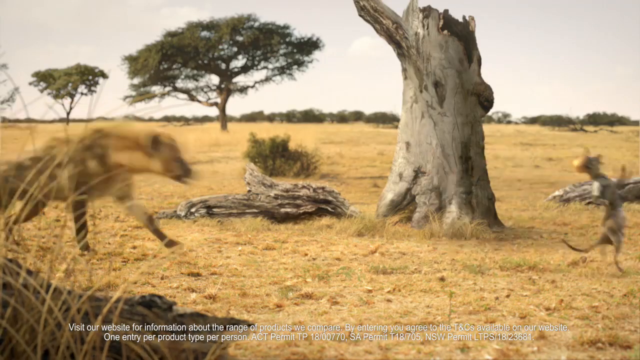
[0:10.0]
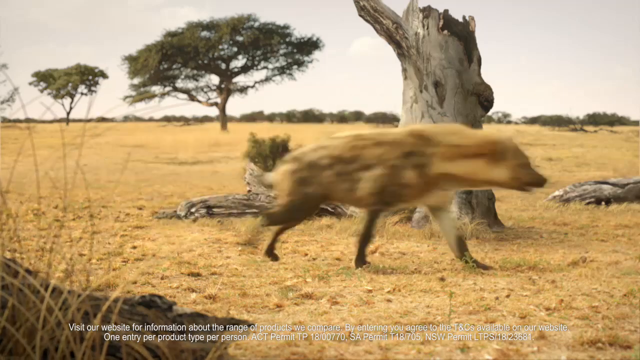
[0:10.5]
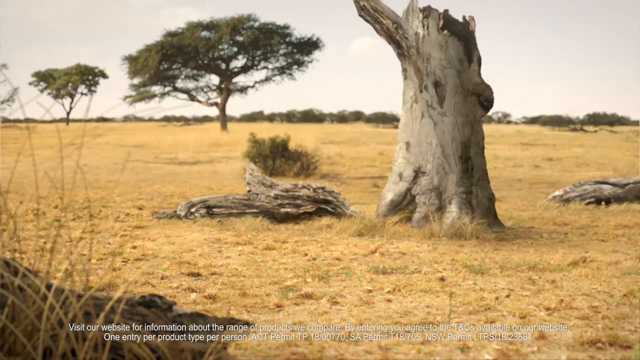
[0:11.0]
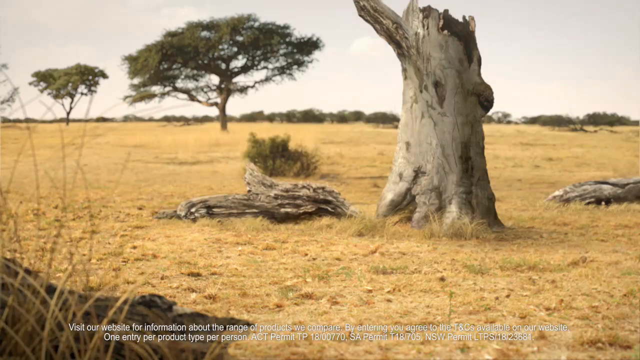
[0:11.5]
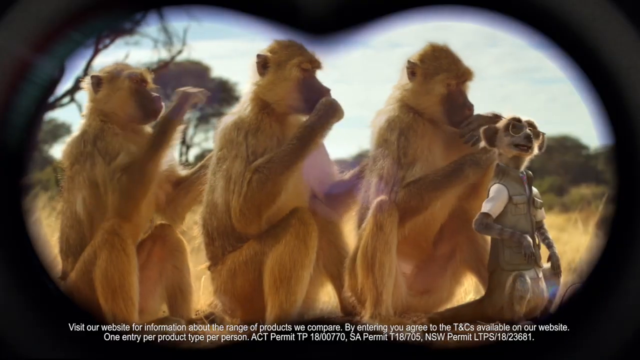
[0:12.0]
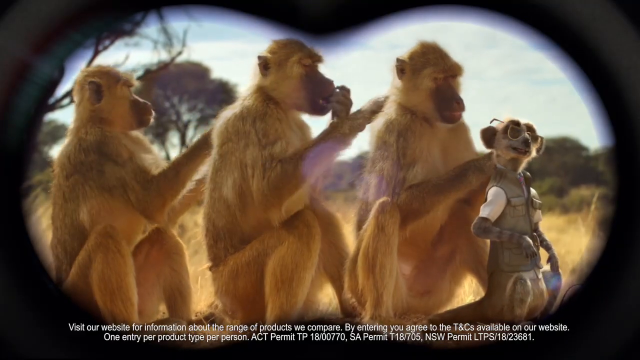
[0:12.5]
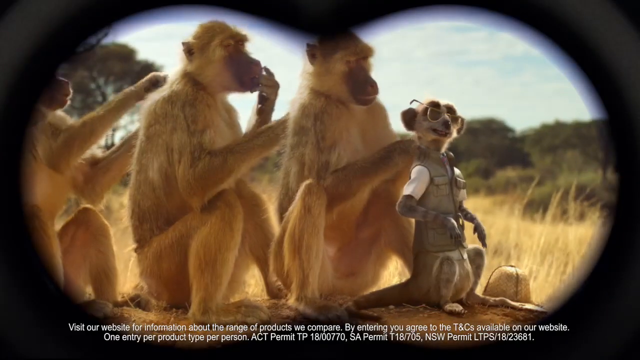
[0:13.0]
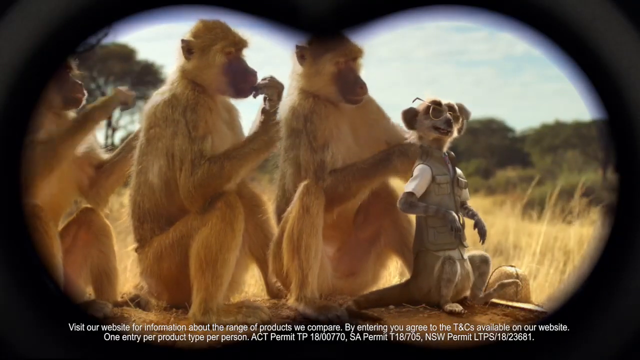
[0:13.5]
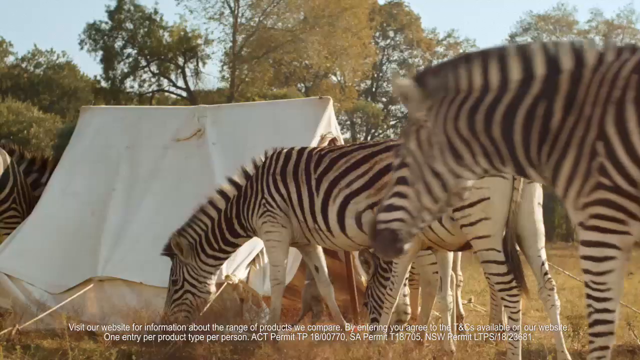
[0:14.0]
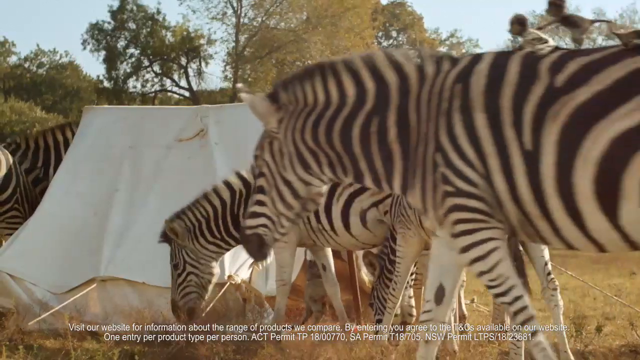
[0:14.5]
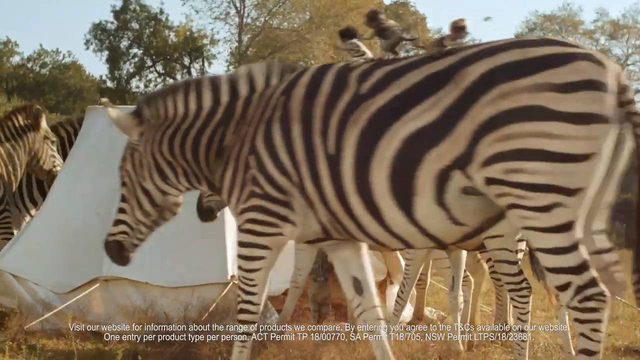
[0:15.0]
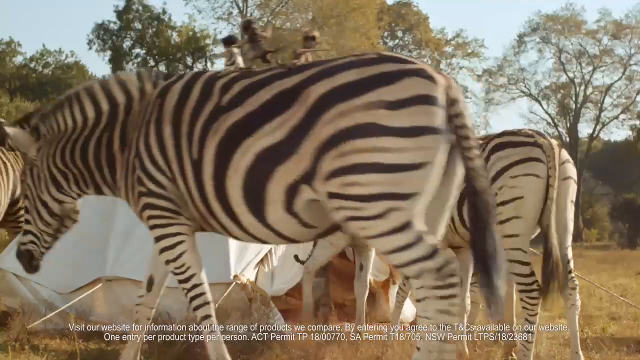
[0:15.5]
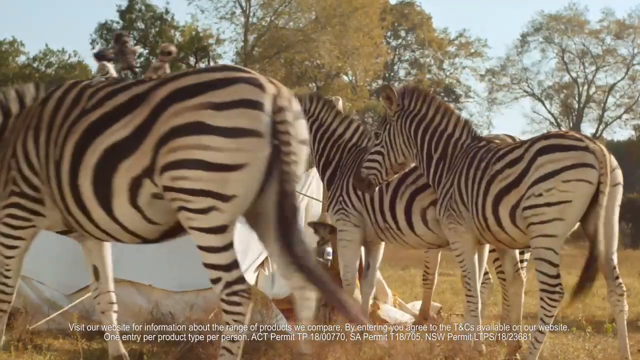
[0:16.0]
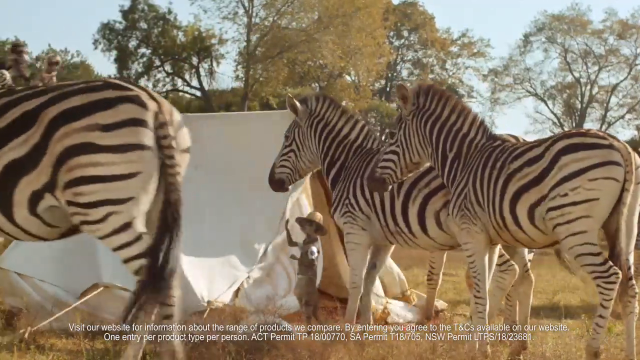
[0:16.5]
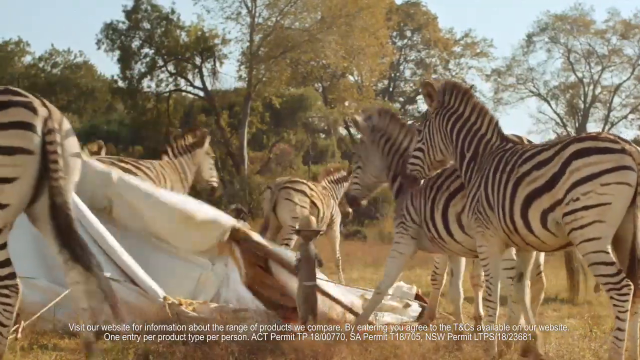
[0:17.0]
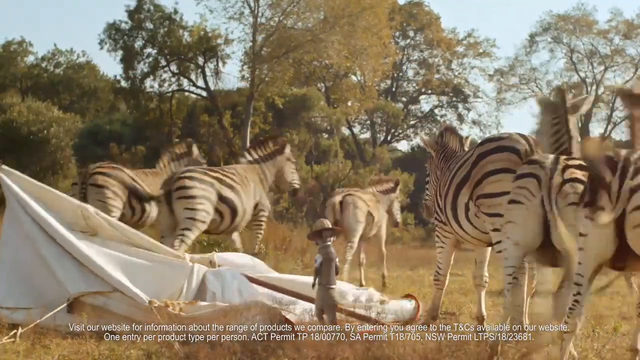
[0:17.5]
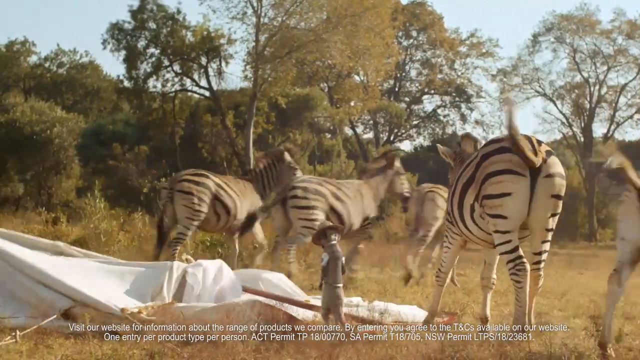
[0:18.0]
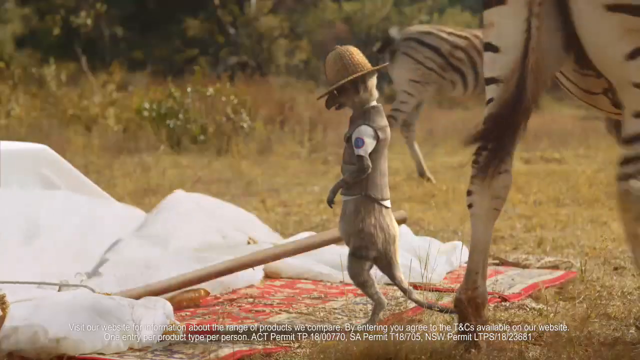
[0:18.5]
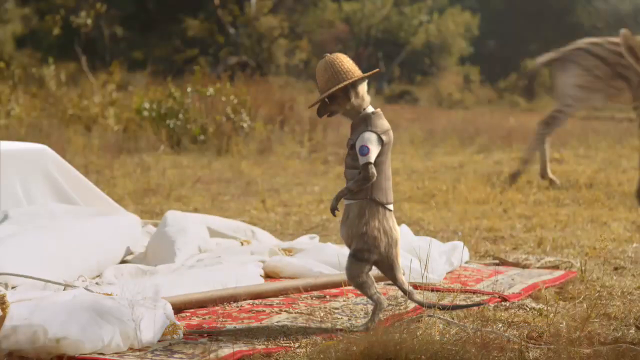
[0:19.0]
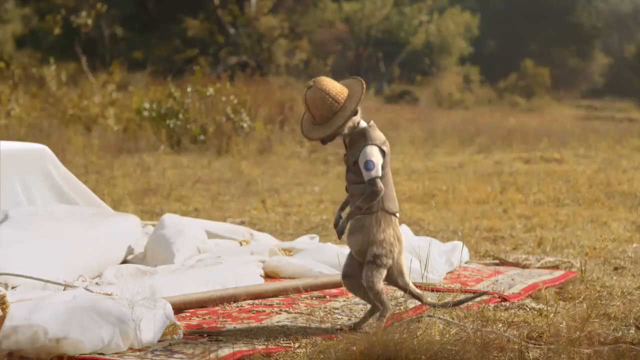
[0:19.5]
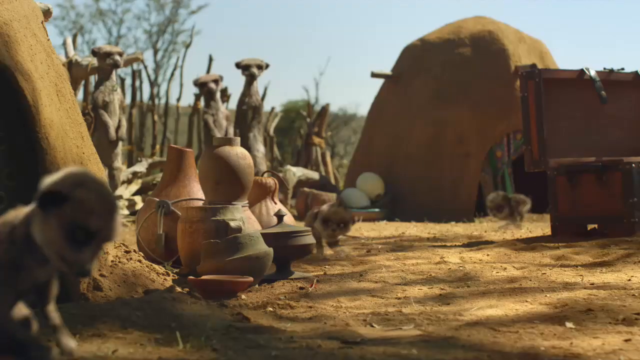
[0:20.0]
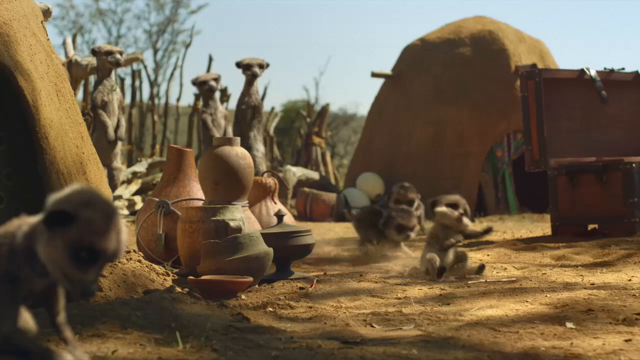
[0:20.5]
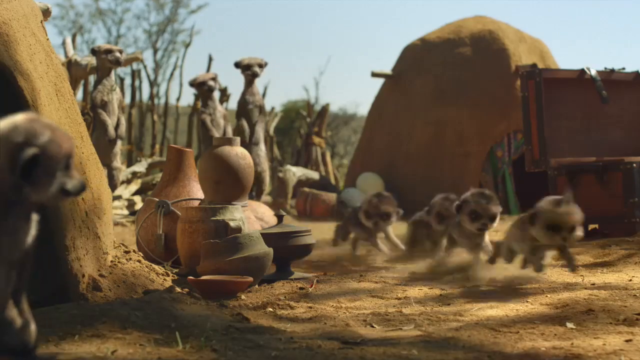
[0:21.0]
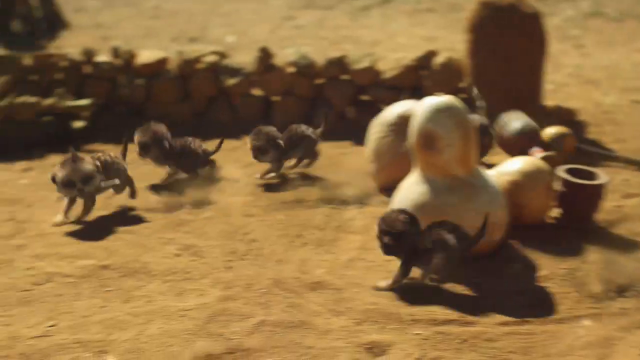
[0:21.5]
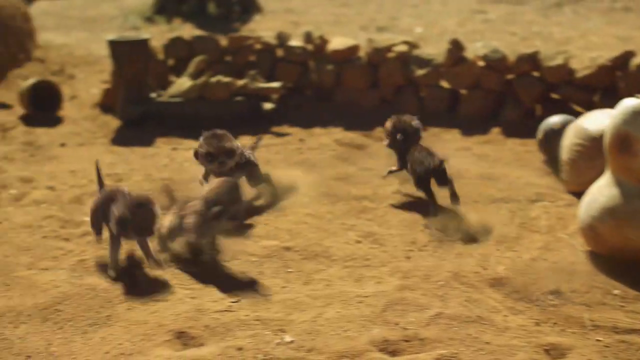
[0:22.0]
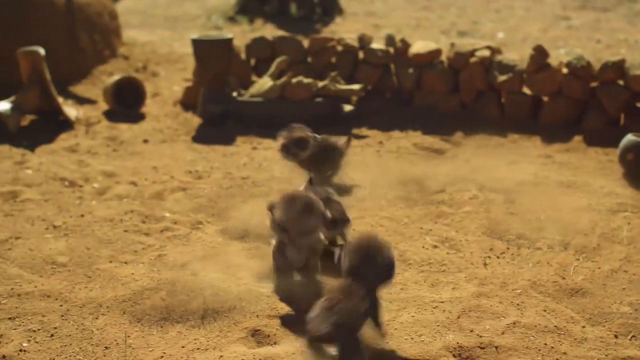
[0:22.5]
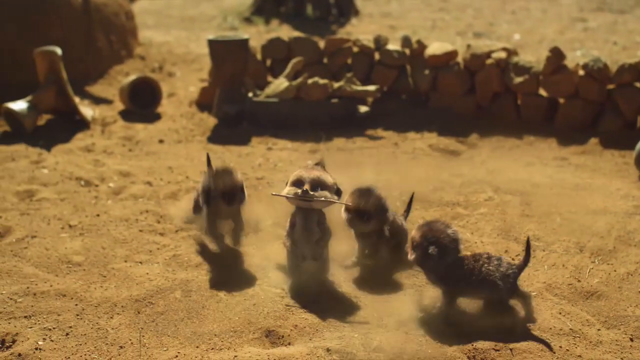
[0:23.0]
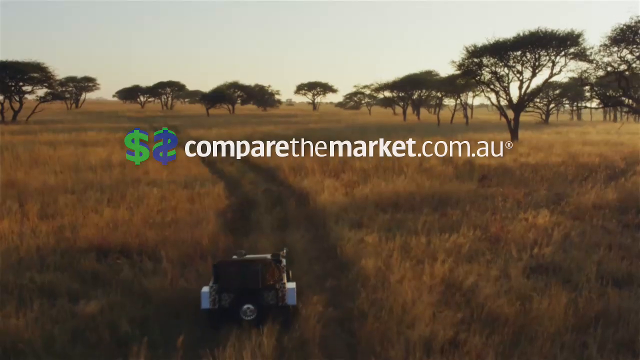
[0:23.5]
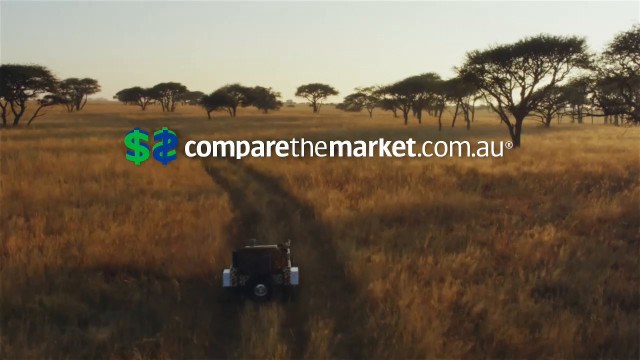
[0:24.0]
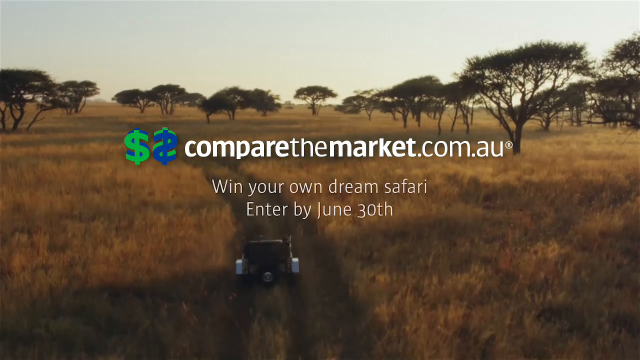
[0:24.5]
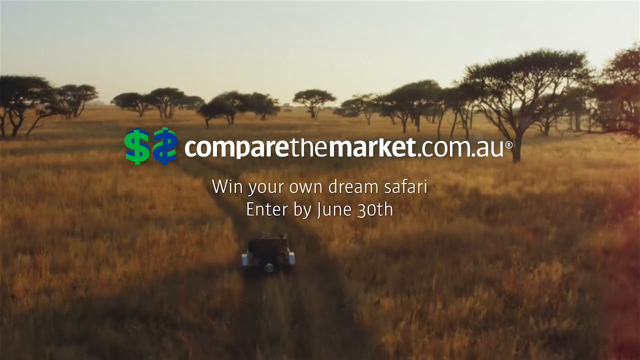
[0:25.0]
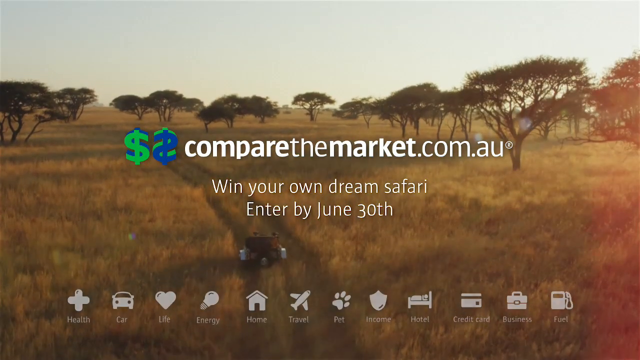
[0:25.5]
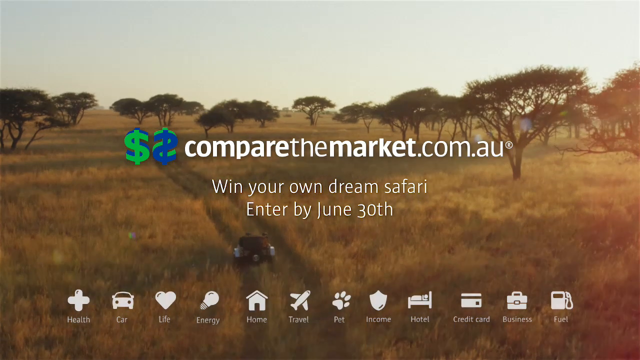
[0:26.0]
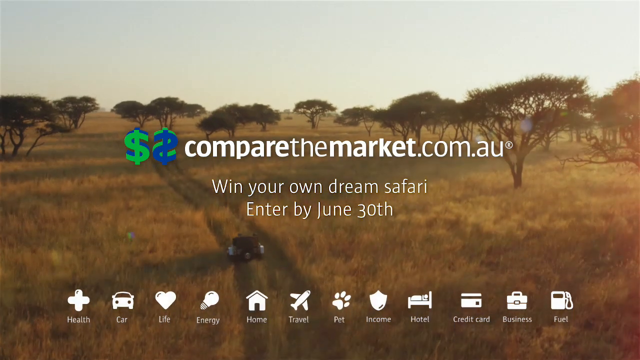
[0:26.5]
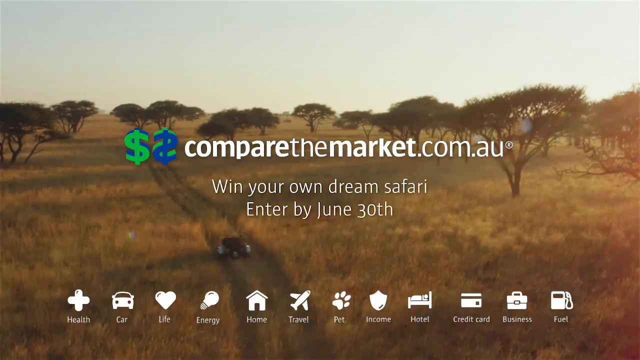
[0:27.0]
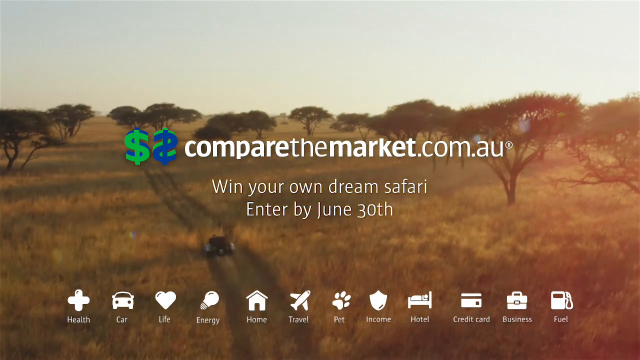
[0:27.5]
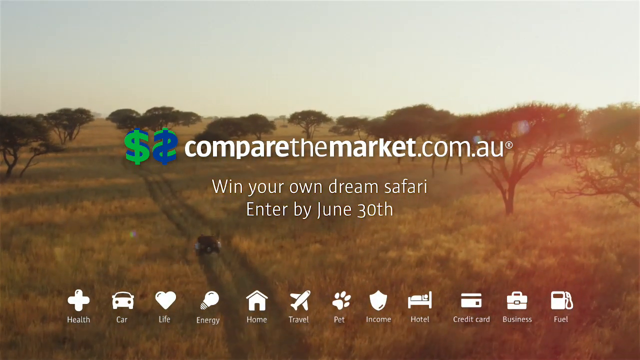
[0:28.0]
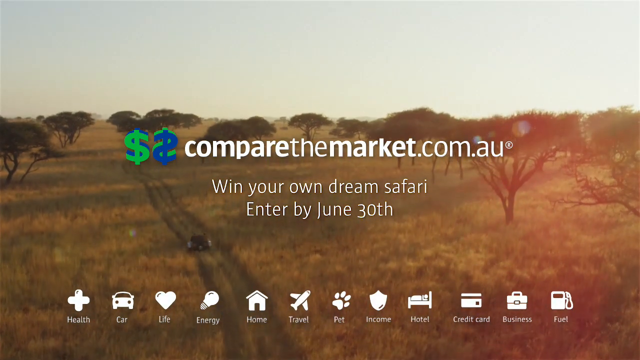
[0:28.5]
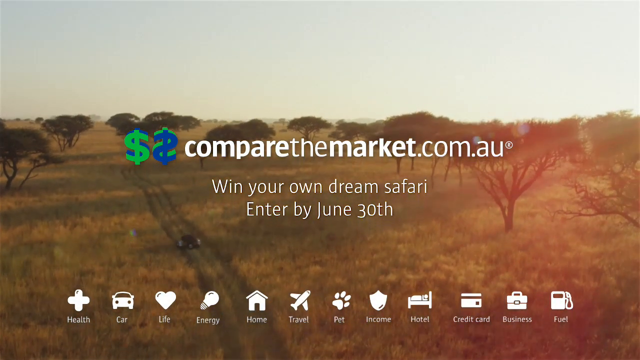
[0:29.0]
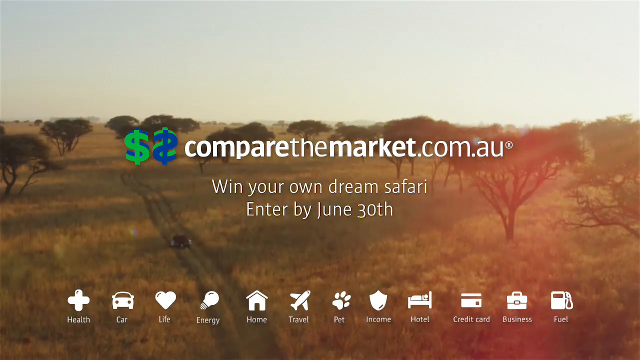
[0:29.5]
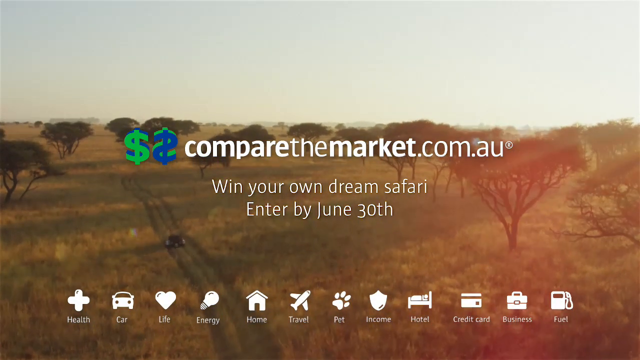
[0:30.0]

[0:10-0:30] Many animals appear, such as monkeys that sit up and try to fly out; they seem to be digital animals.